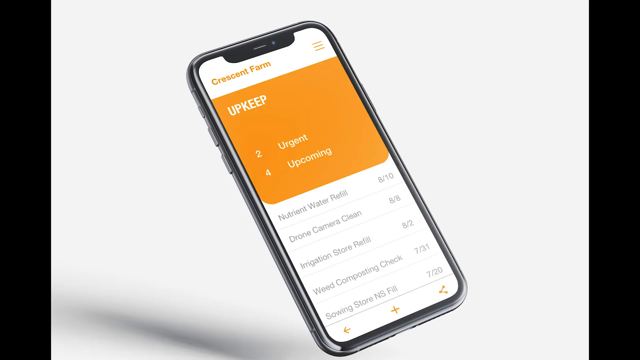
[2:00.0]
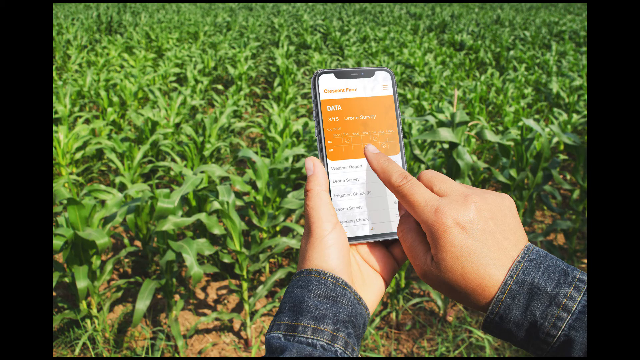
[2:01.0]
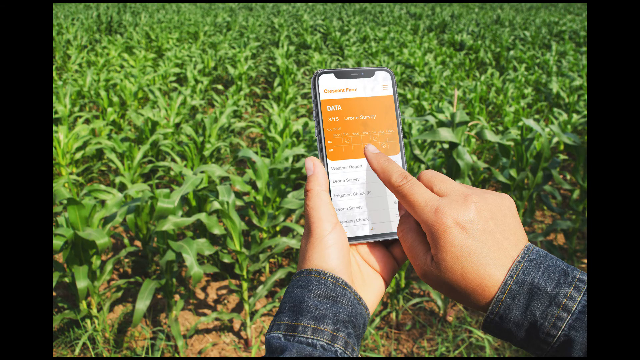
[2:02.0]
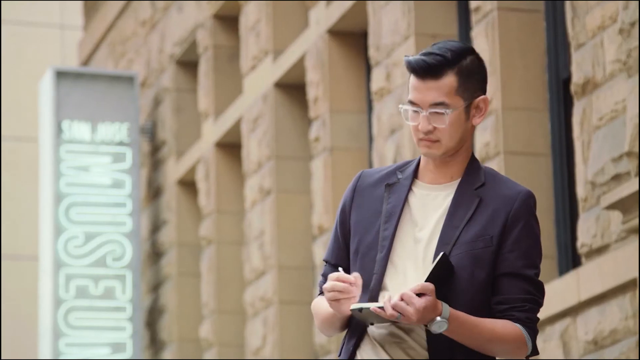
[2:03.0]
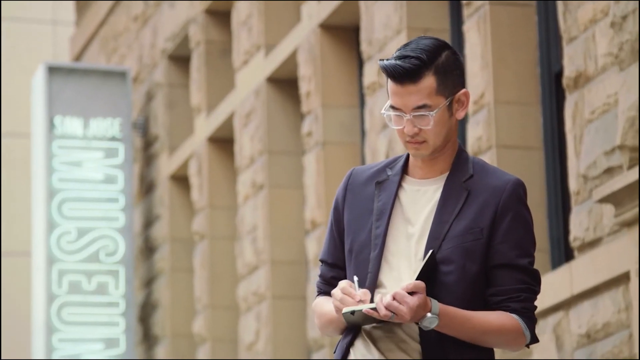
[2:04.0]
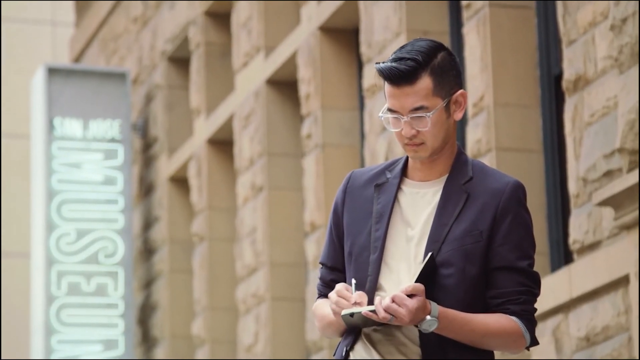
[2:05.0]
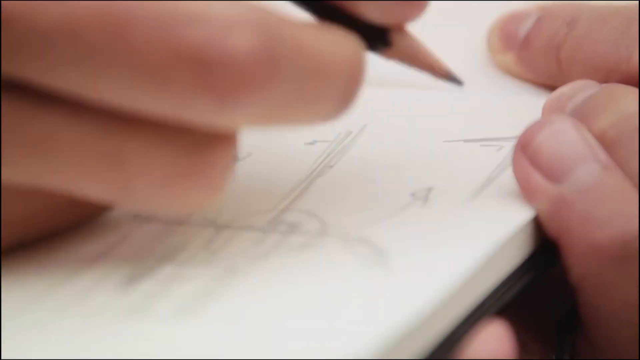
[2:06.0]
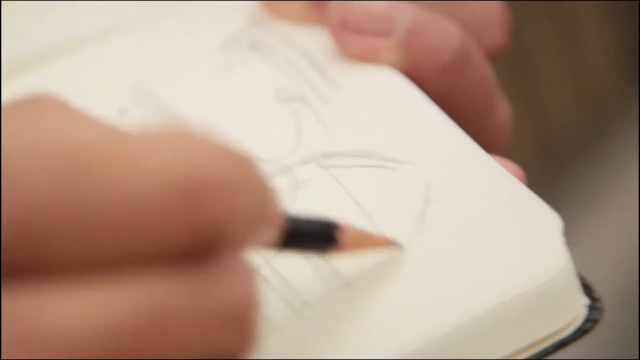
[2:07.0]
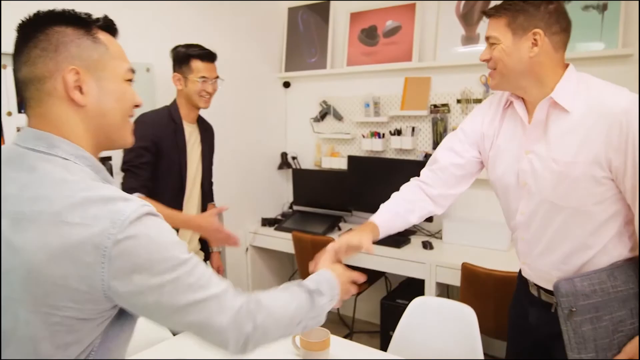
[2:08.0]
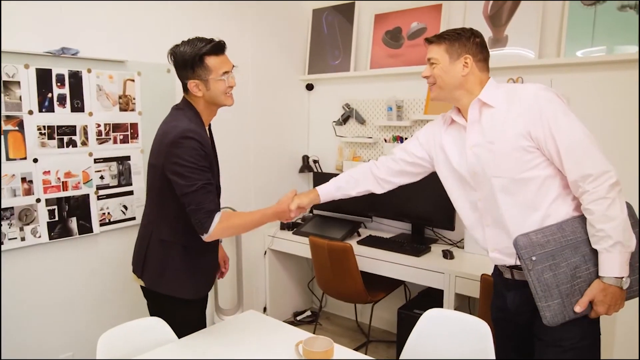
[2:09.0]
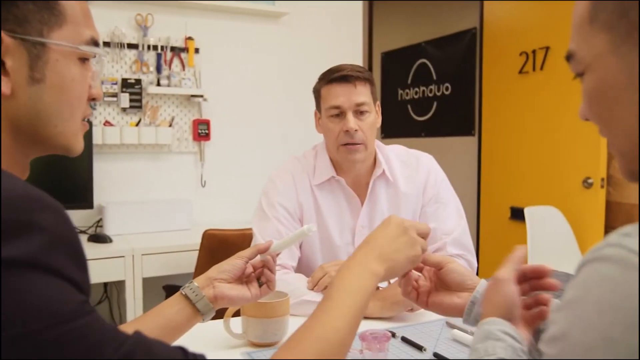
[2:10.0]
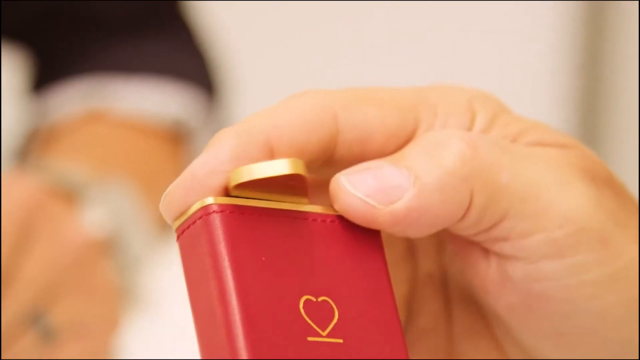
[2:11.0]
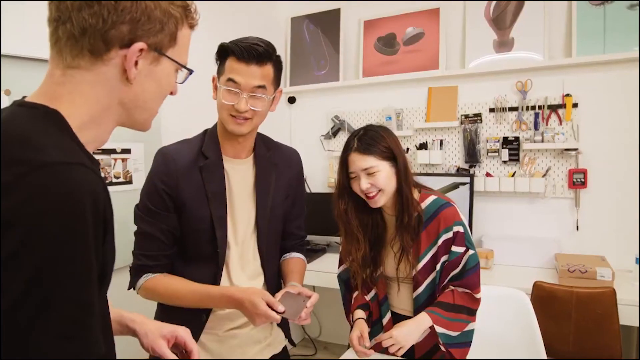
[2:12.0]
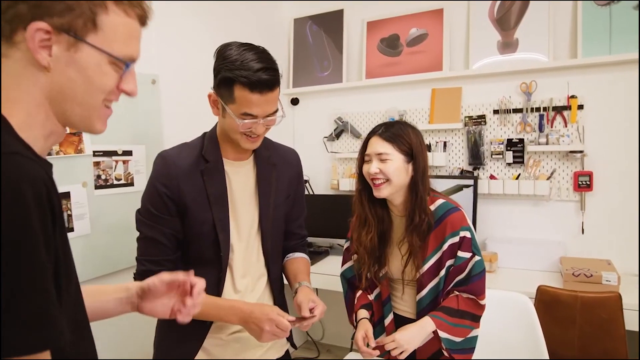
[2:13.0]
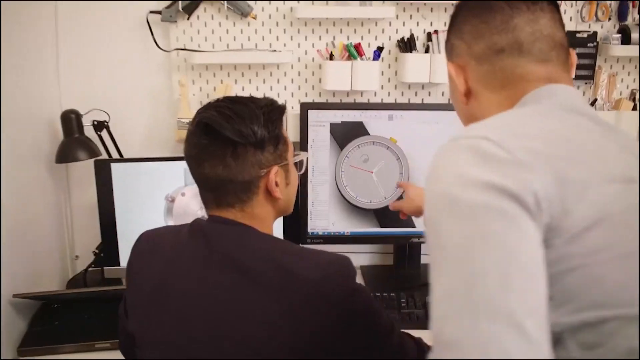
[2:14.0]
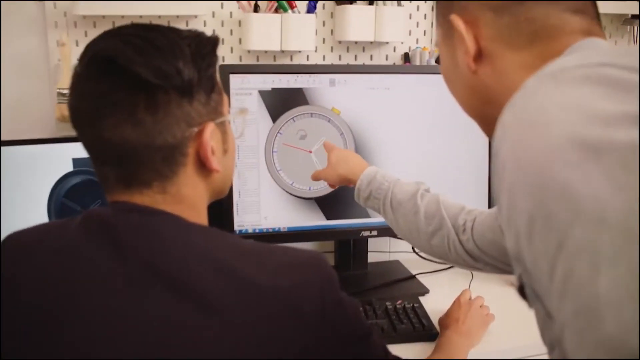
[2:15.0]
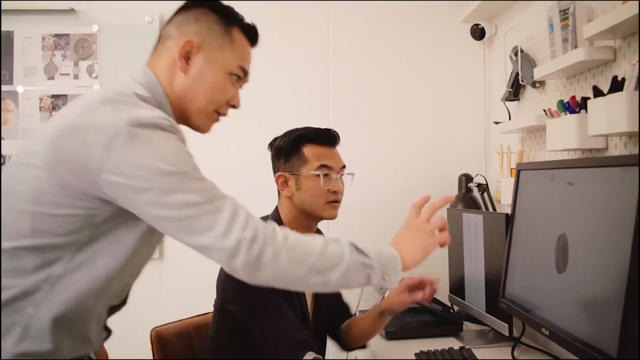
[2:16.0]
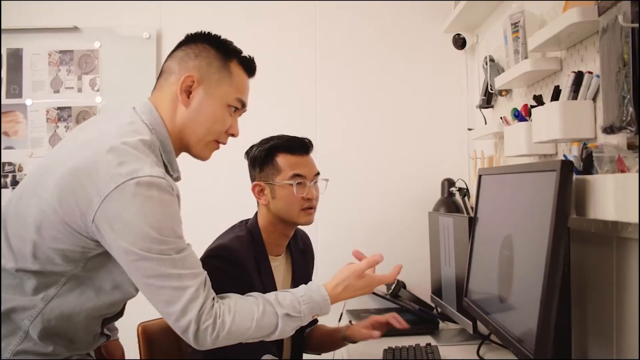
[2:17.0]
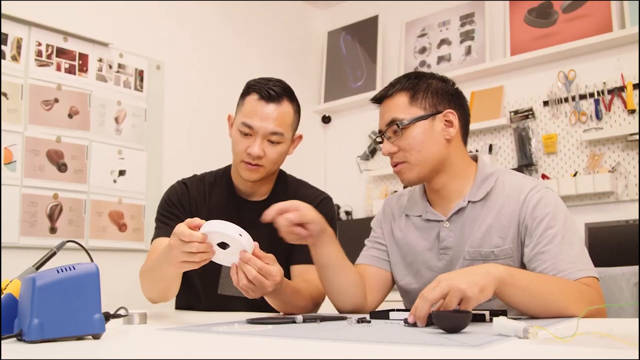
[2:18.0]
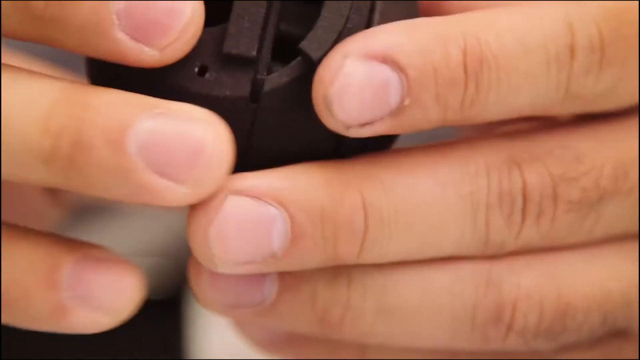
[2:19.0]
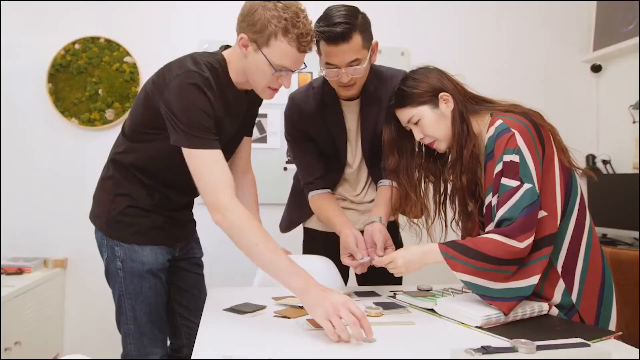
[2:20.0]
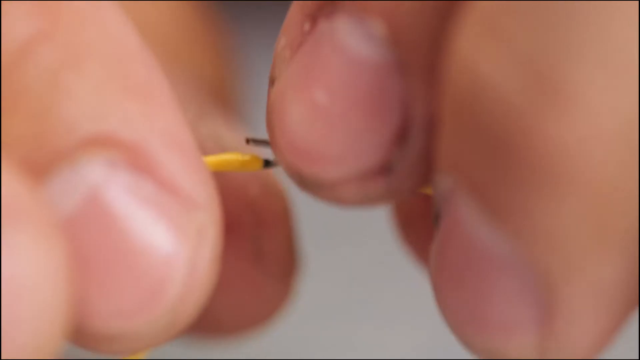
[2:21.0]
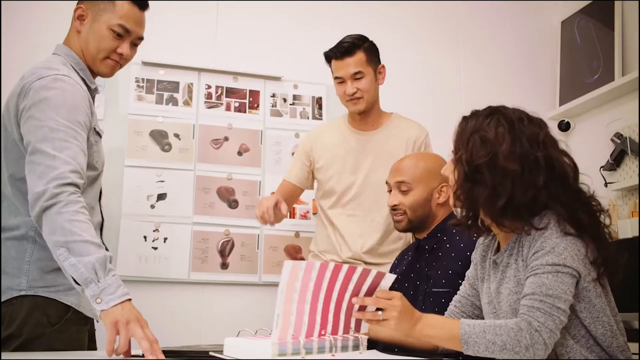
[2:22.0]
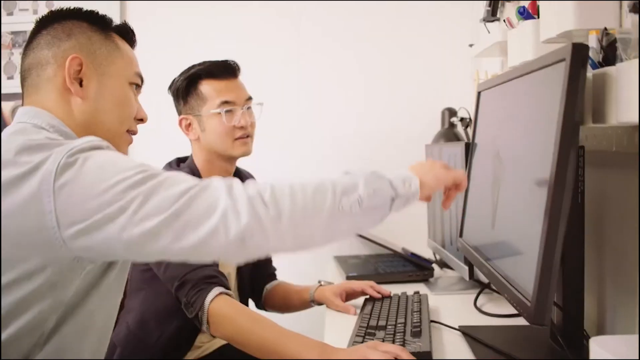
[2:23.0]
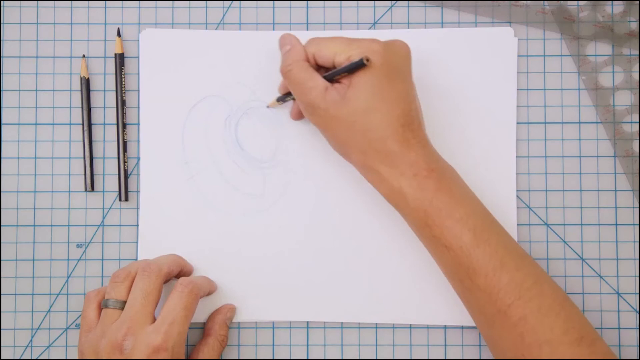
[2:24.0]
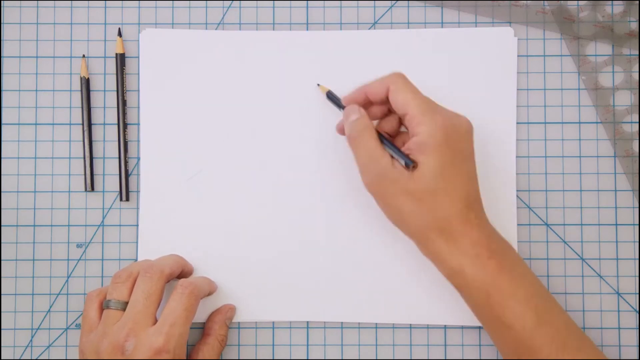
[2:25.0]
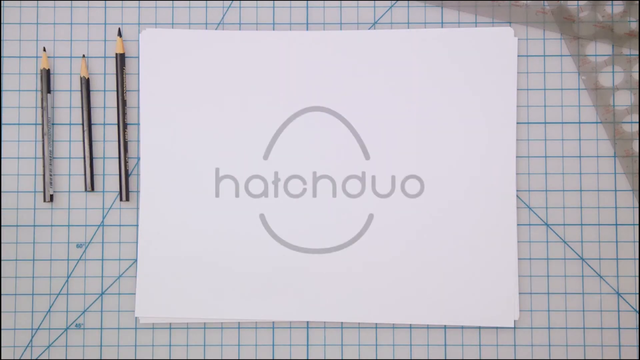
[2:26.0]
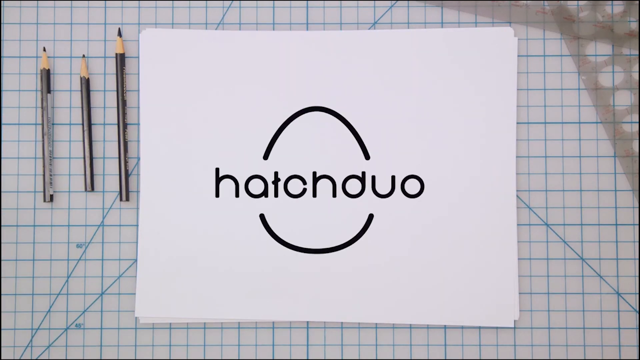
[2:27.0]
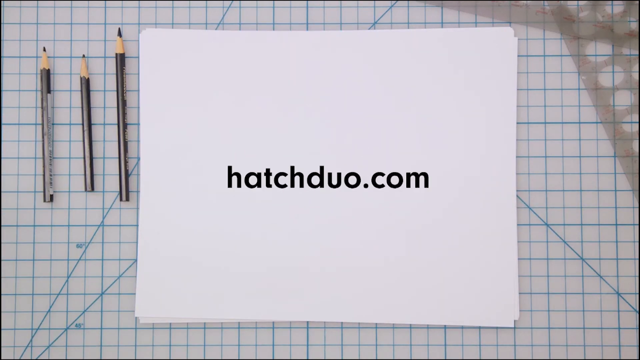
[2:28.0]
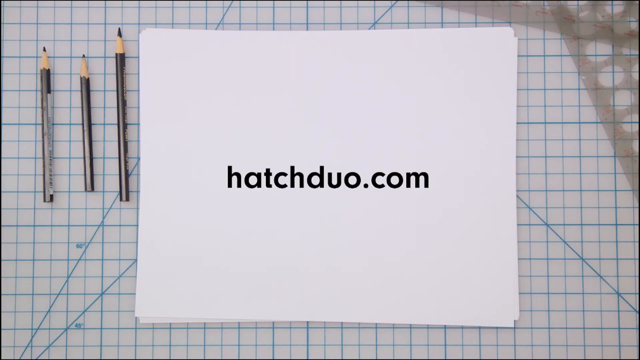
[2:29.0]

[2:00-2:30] A phone shows the Crescent Farm app in orange and white. Next, a person holds the phone with their hands in front of a green field of plants that look like corn, and the right hand's index finger presses a button on the screen. The image goes away, and a short shot shows a man in a black suit jacket with rolled-up sleeves, a white undershirt, slicked-back black hair and clear glasses, writing and making drawings in a pad of some sort with a black pencil. The video cuts to three men shaking hands inside a white room with various tools hung on the walls. They appear to be working together on the device: one man sits in front of a computer working on a model of what looks like a clock or watch, while another man points to it and gives him directions. A couple more quick shots of them working together follow, transitioning quickly into one another. At the end of the video, a promotional graphic shows a white piece of paper with the HatchDuo logo in the middle.